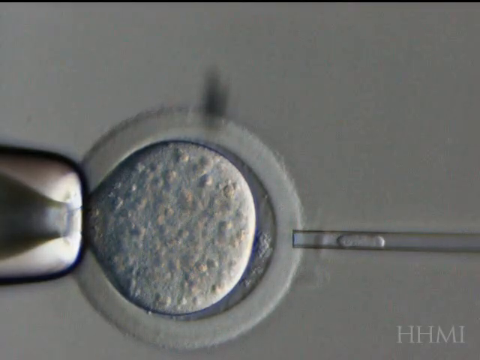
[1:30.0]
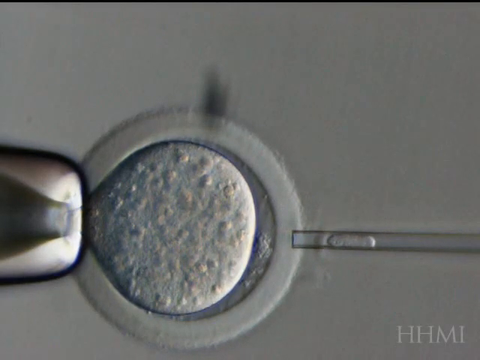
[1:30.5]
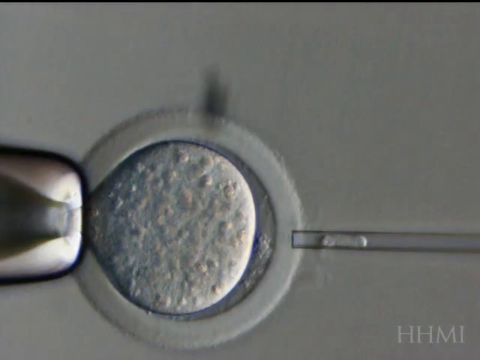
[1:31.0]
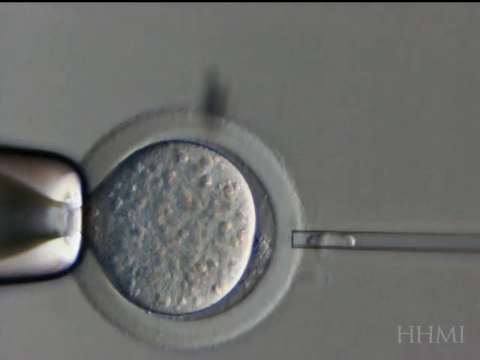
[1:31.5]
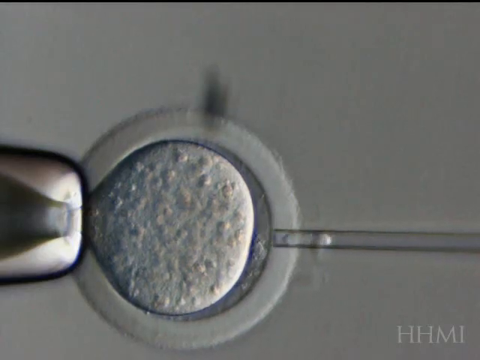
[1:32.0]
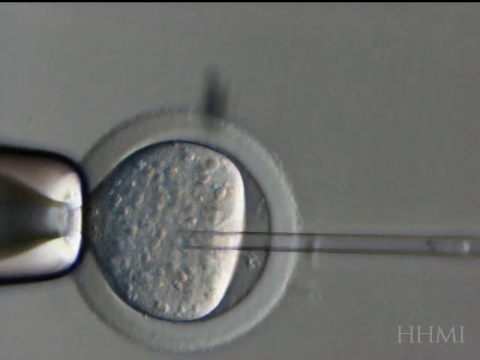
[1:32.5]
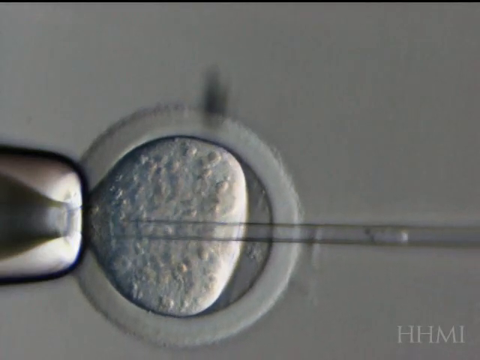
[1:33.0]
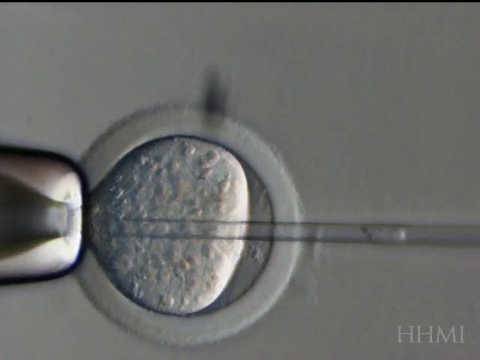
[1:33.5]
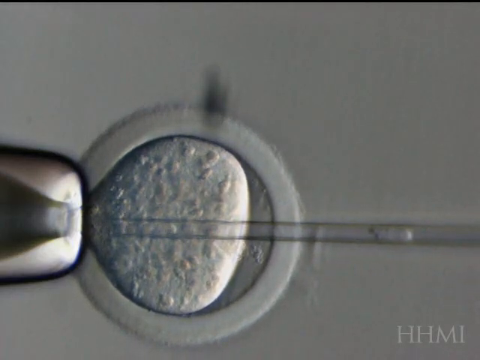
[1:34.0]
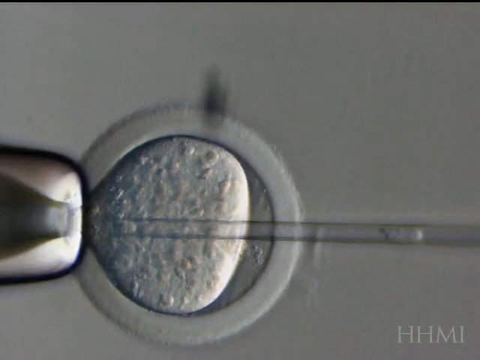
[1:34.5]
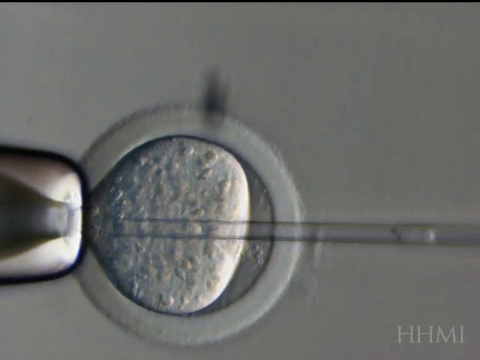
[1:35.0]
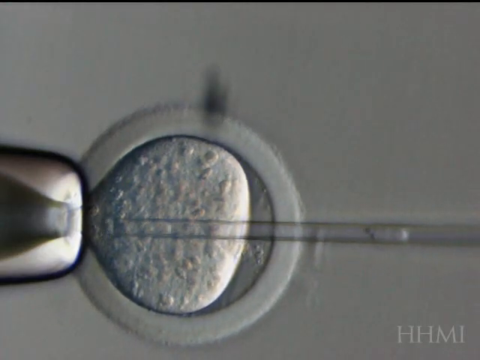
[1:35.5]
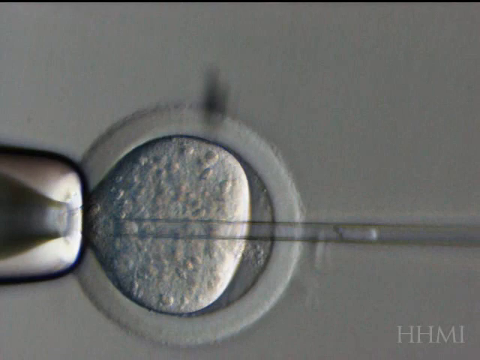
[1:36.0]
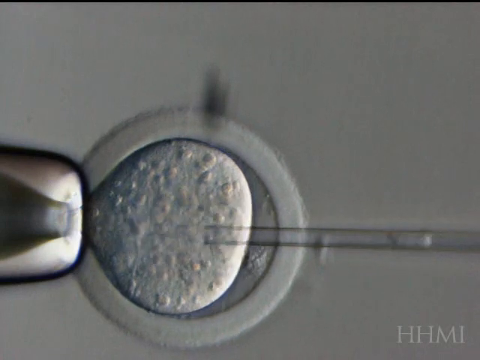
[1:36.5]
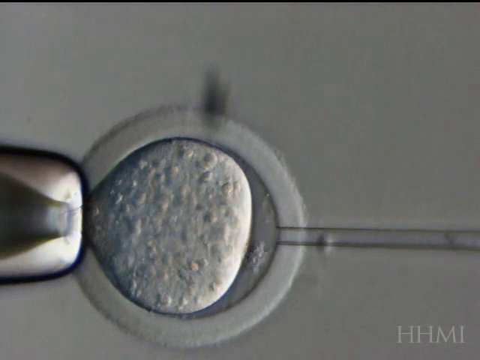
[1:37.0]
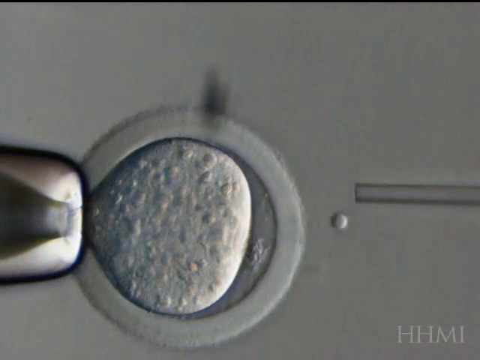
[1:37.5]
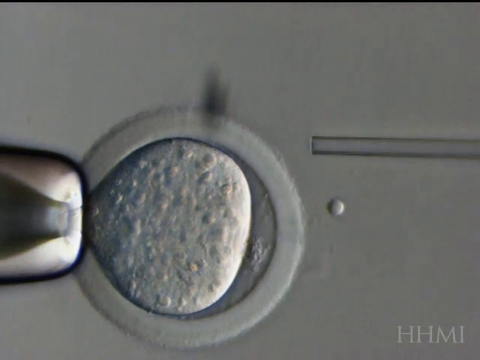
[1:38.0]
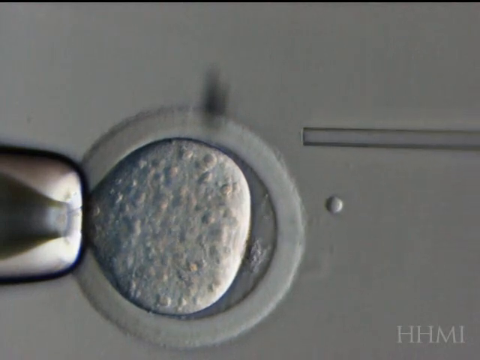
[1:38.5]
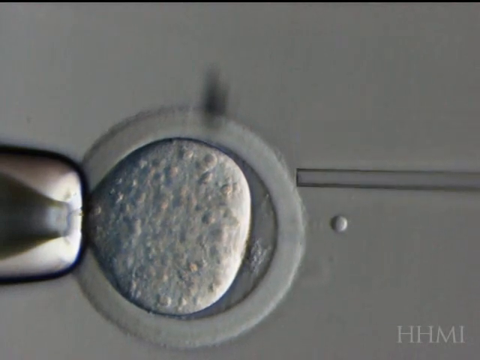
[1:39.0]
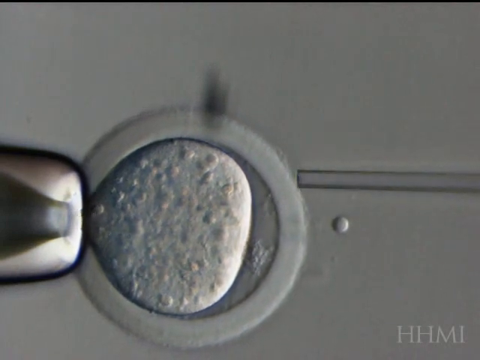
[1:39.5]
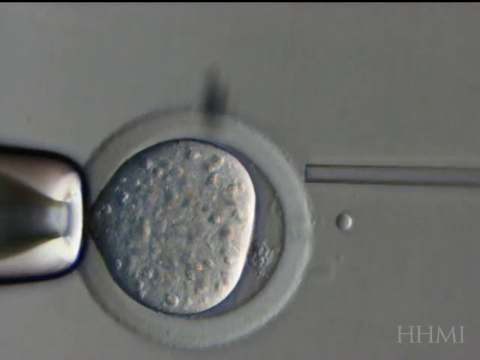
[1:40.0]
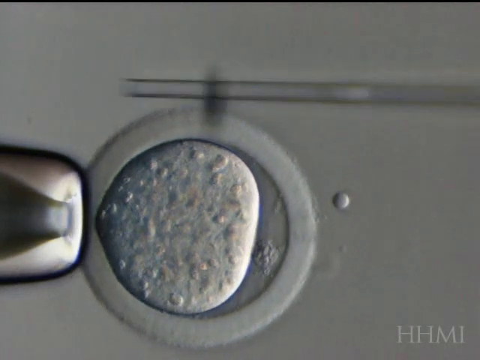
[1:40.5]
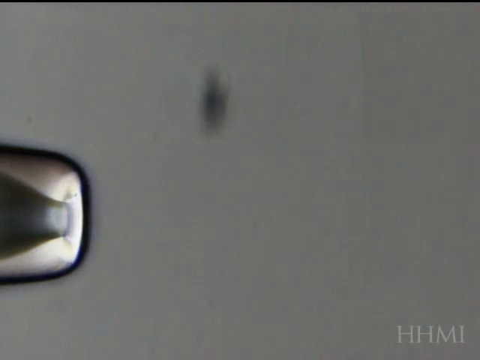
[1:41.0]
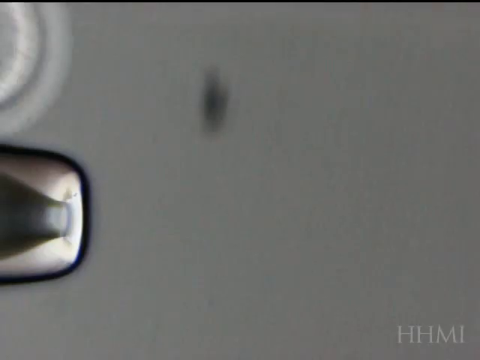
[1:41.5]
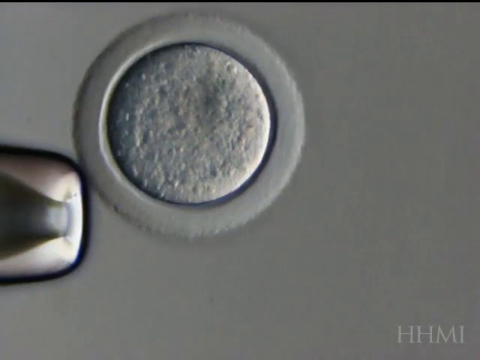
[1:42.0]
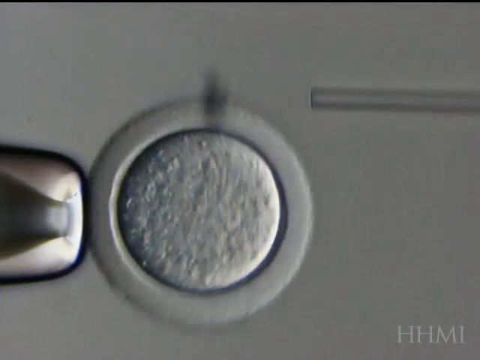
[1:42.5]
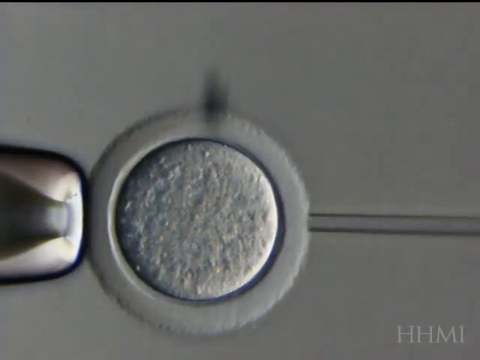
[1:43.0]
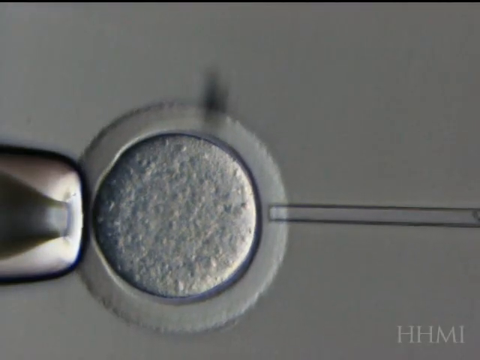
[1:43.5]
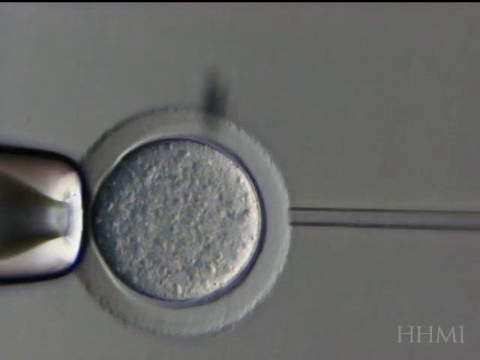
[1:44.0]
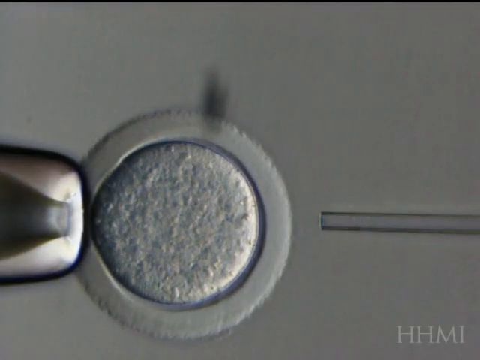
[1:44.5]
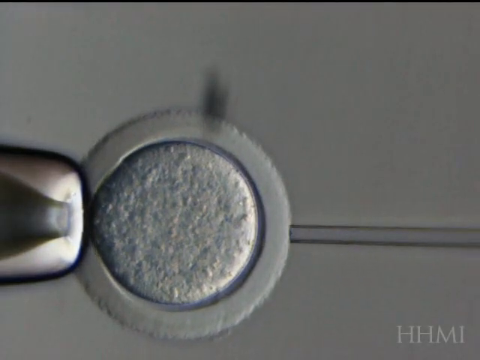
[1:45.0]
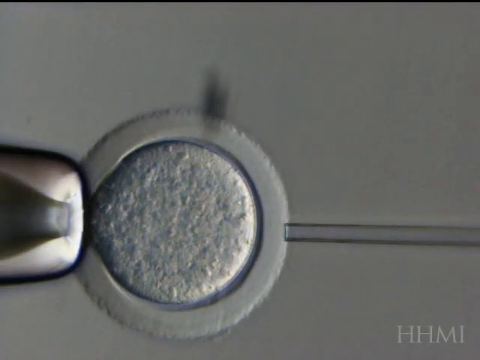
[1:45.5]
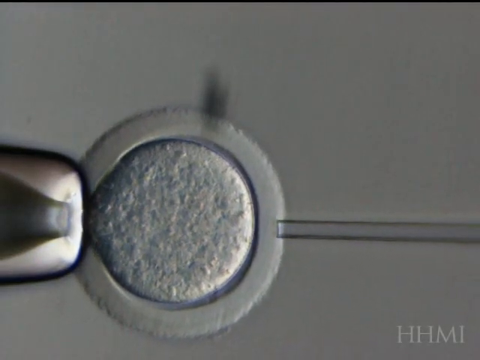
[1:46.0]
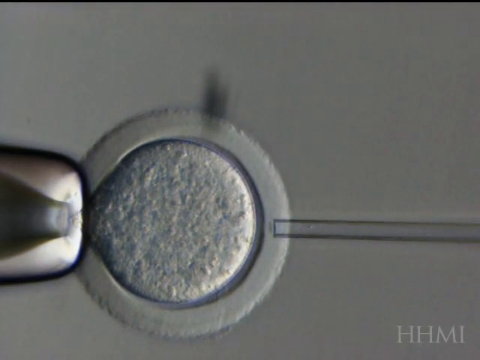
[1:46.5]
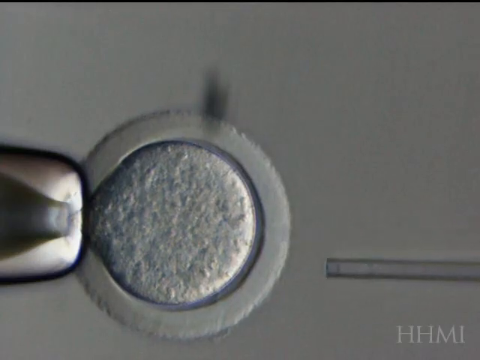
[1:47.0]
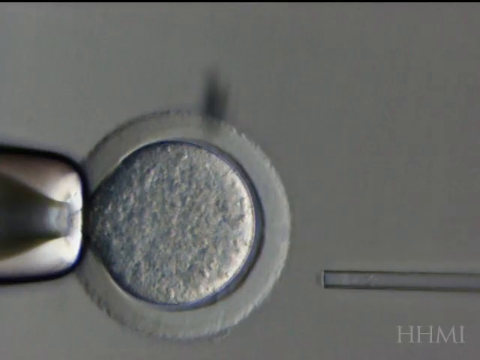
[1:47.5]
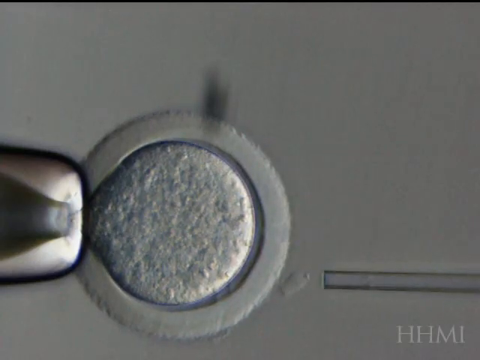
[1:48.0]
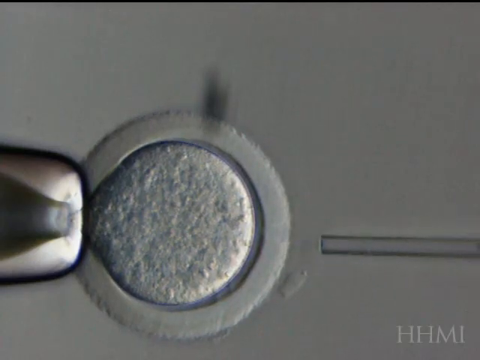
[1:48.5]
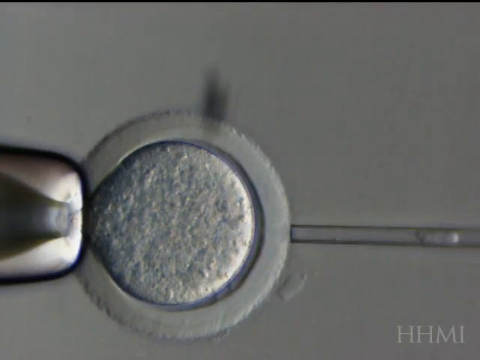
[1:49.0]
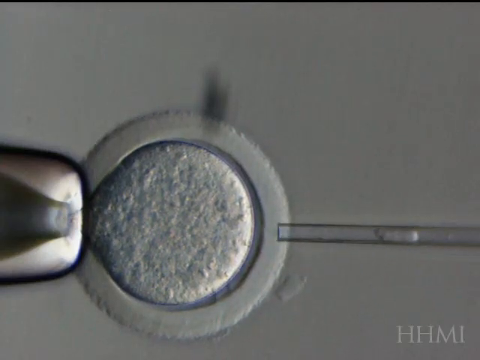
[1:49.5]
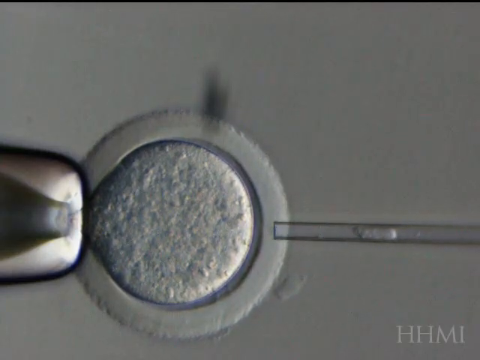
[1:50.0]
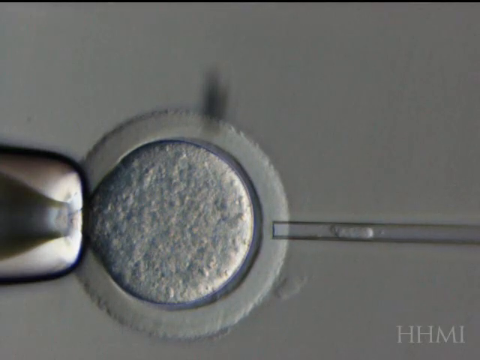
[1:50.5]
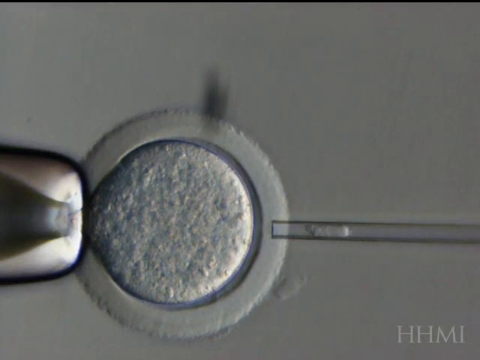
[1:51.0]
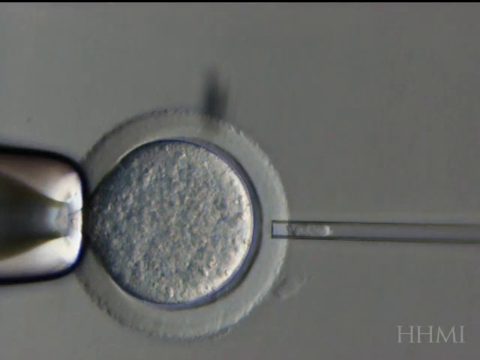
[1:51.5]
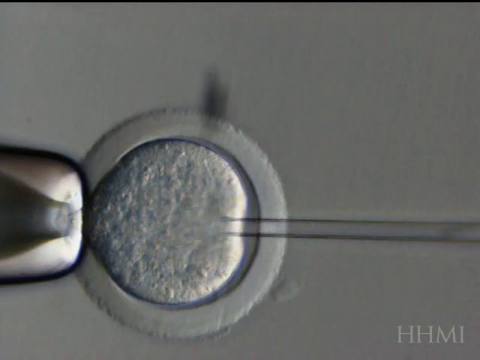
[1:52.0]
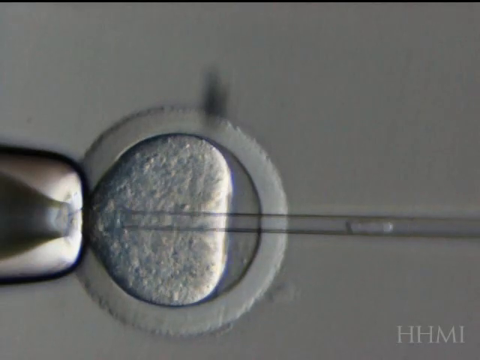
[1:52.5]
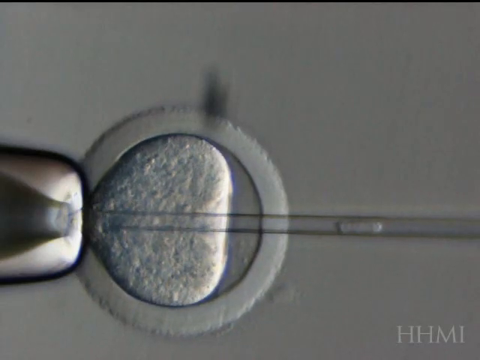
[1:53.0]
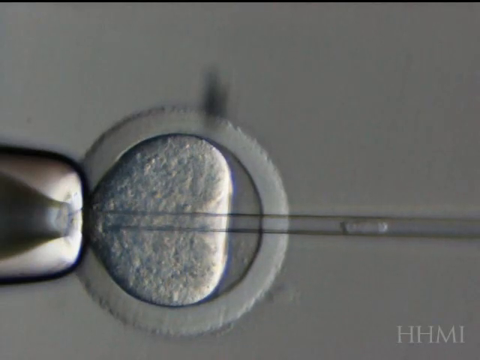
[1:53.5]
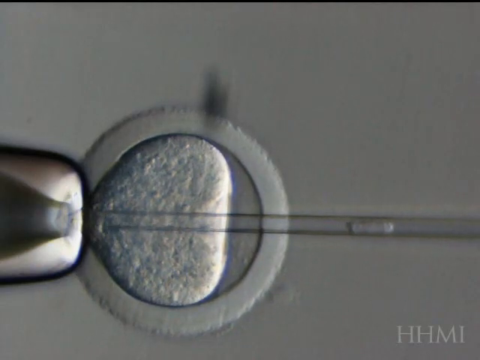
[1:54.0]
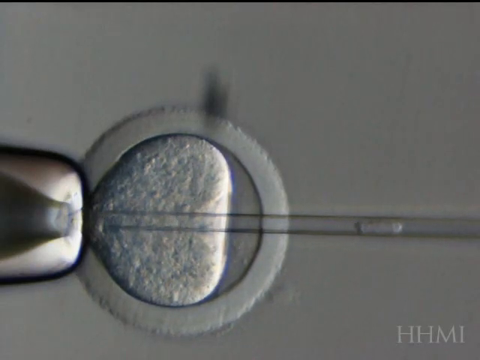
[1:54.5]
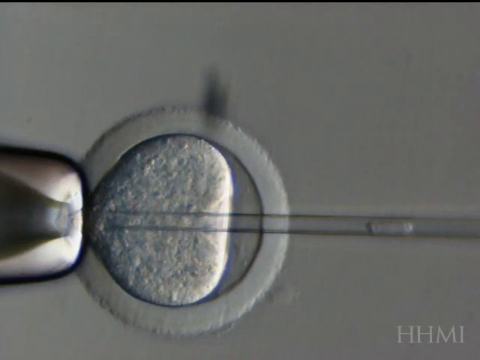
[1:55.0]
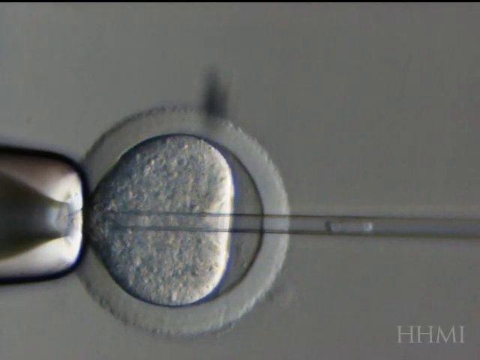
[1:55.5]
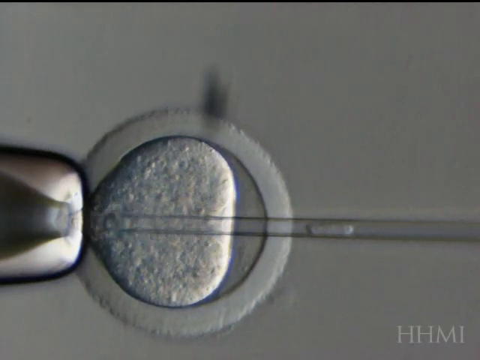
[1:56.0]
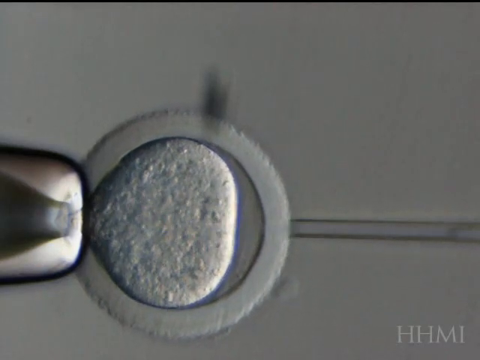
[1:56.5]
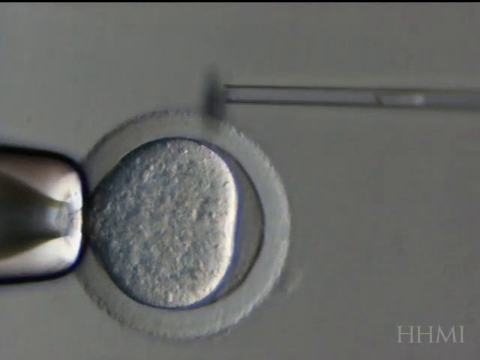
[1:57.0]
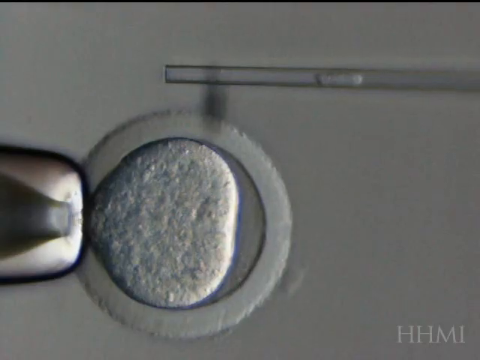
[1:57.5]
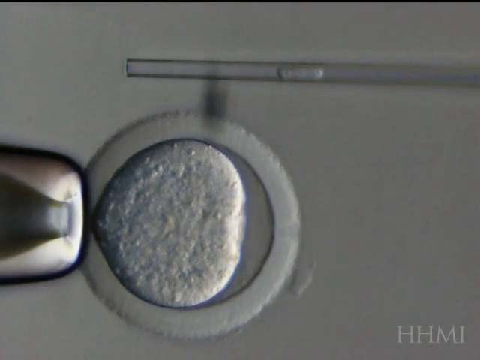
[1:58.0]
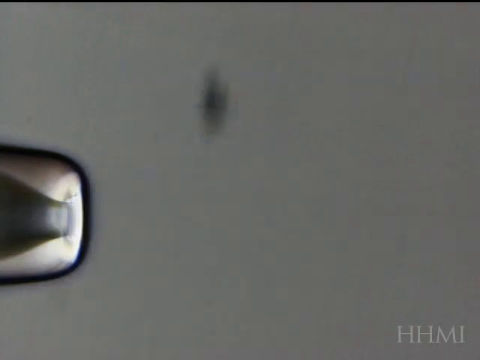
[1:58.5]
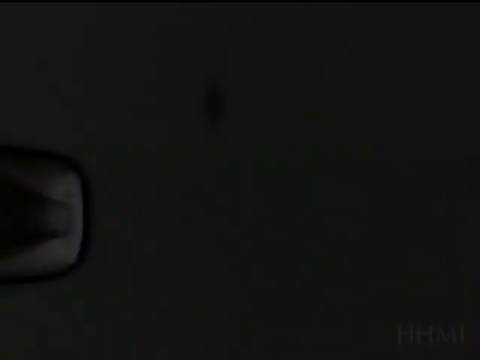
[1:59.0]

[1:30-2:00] The glass instrument pierces all the way through the outer membrane into the inner membrane and straight into the substance, continuing almost all the way through until it hits the tip. When it pulls out, a small bubble of material is pulled out with it and sits in the background. The glass instrument then pushes the cell-looking object off screen, but it promptly reappears at the top of the screen. The glass instrument appears to push the cell into the metal tip once again. As it pierces the outer membrane, a little material is collected and promptly dispelled by the glass tip. The glass instrument then continues to pierce the object all the way through, and there is a small bubble of air in the glass object. It once again pushes the membrane off screen, and once again it reappears. As the glass object pierces into the inner membrane, it looks like it is collecting some material from the inside of the cell.